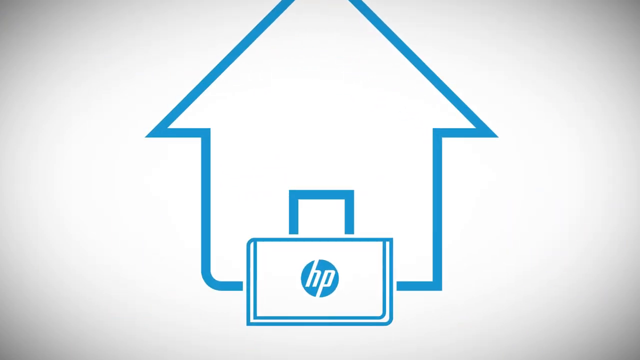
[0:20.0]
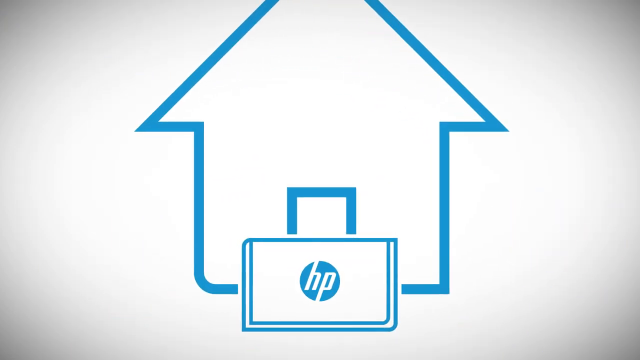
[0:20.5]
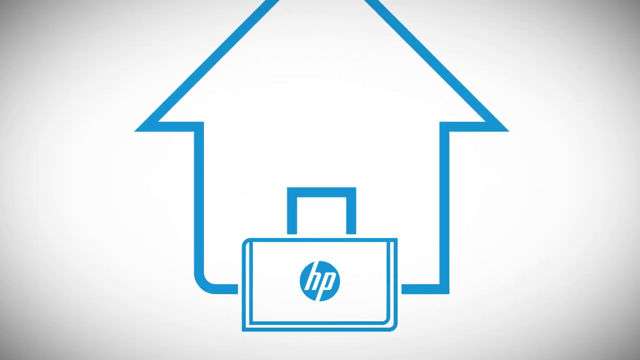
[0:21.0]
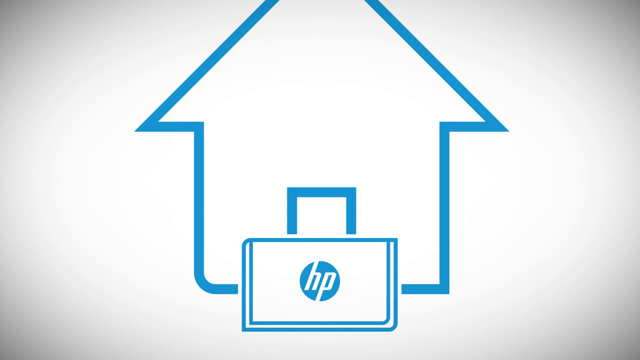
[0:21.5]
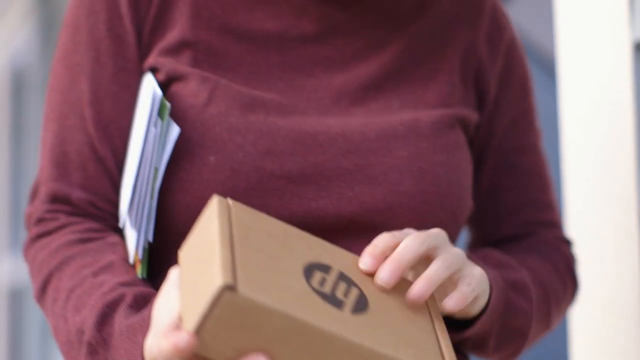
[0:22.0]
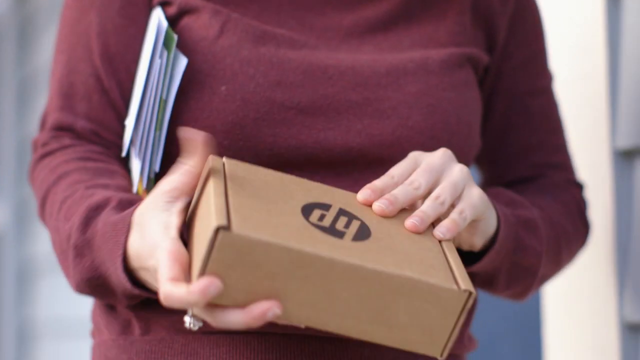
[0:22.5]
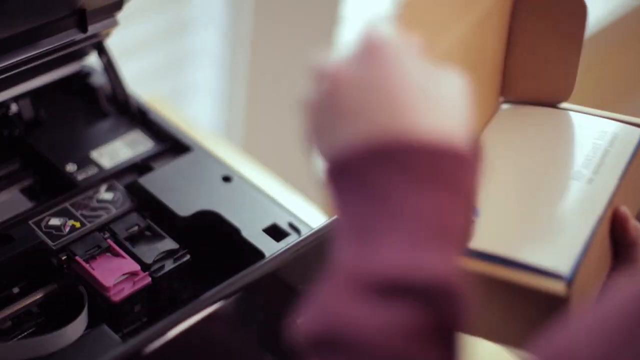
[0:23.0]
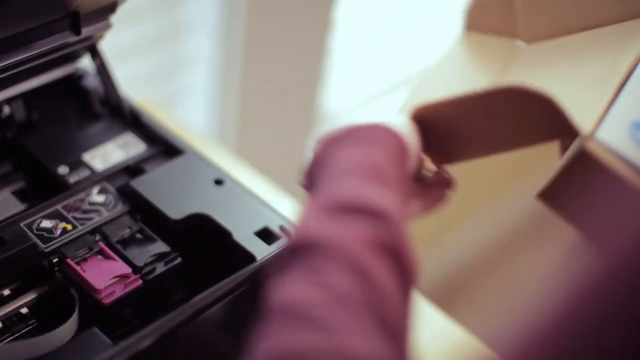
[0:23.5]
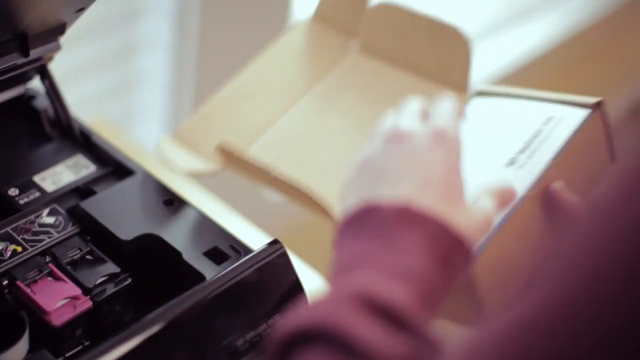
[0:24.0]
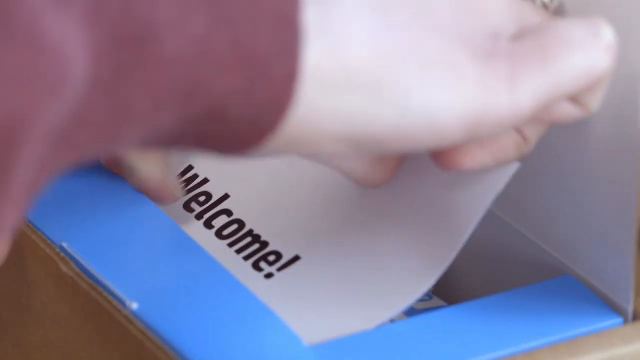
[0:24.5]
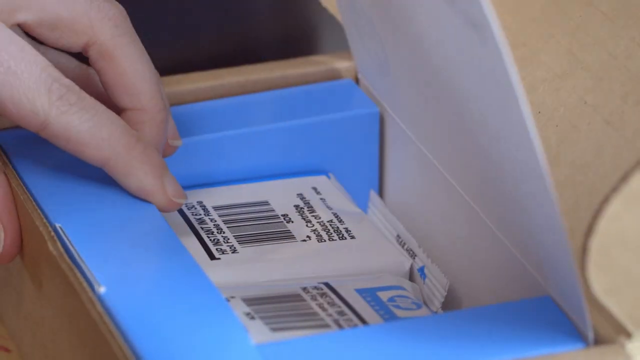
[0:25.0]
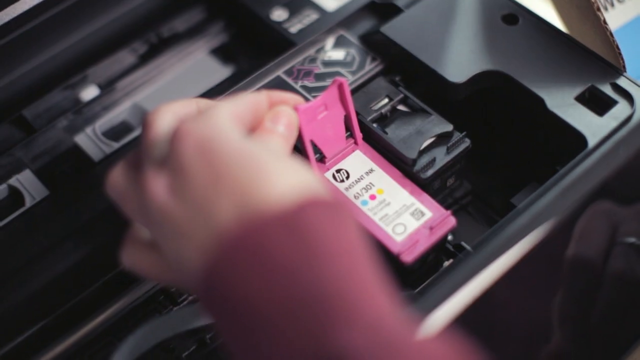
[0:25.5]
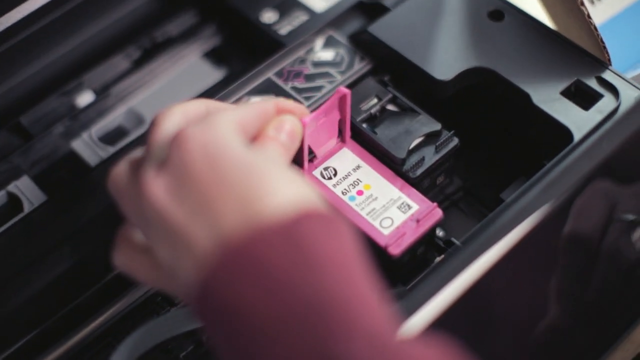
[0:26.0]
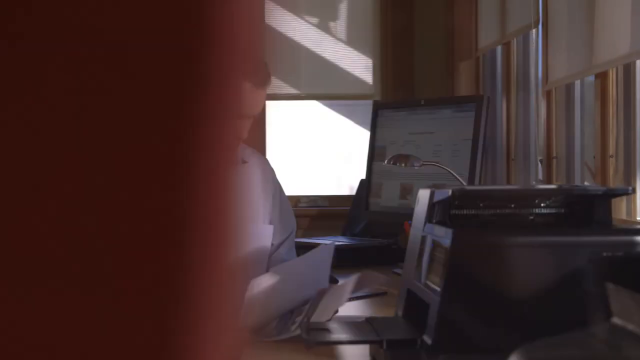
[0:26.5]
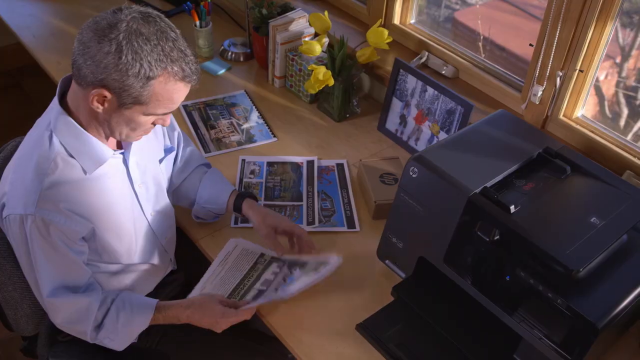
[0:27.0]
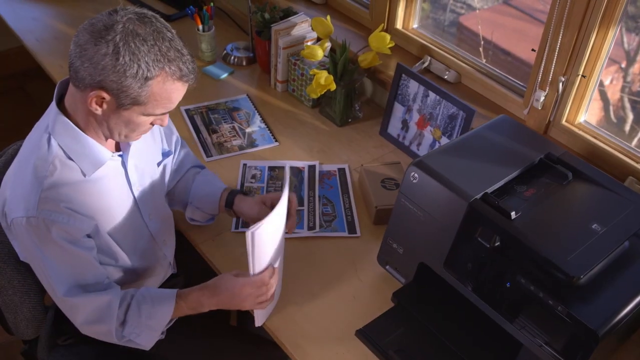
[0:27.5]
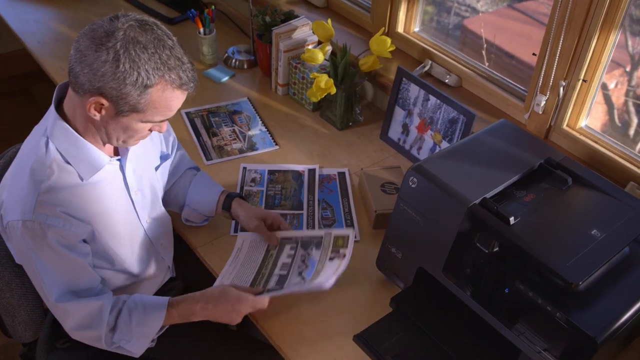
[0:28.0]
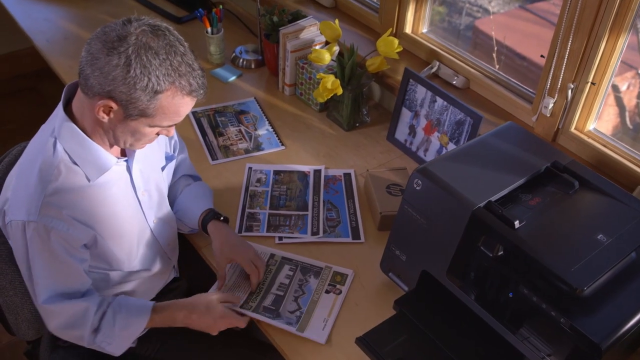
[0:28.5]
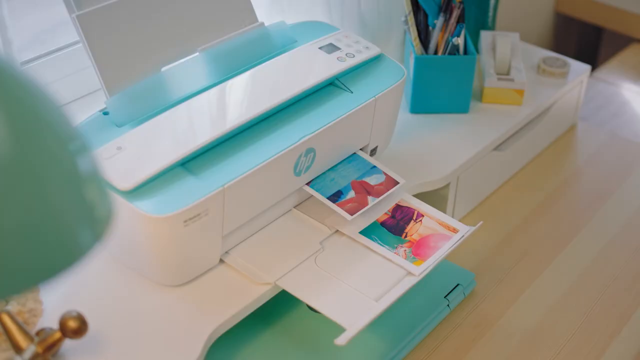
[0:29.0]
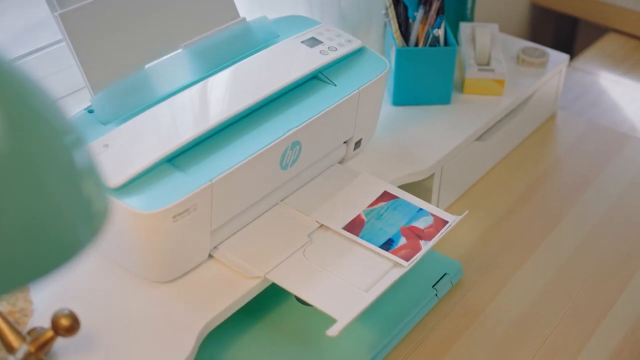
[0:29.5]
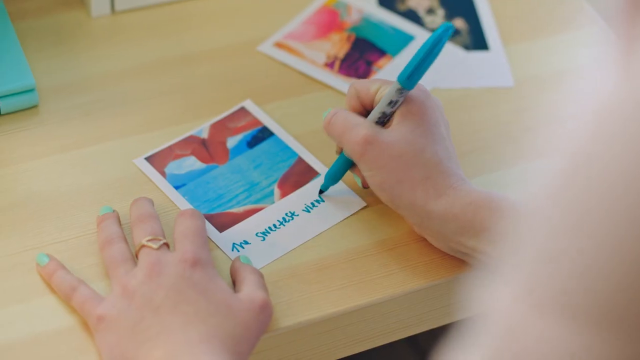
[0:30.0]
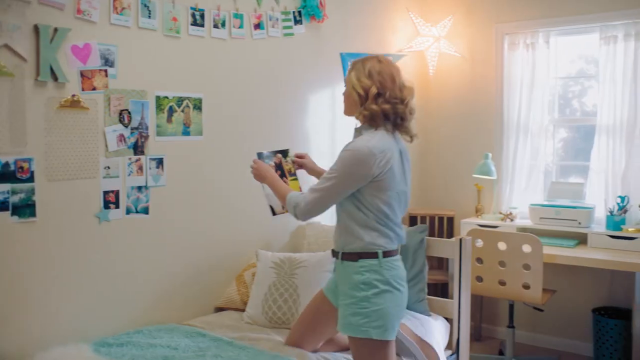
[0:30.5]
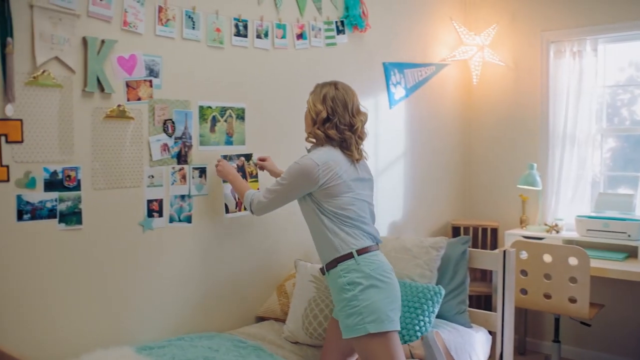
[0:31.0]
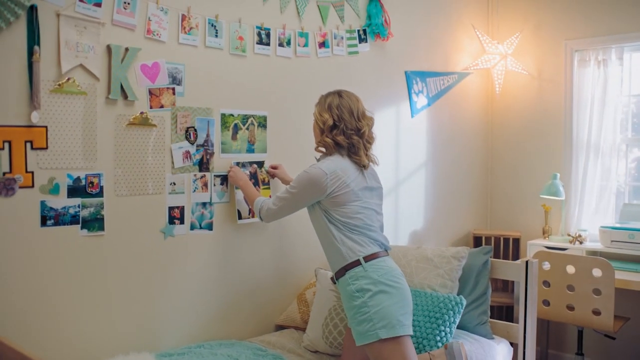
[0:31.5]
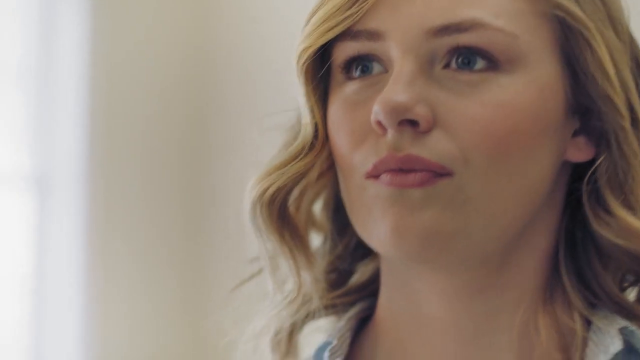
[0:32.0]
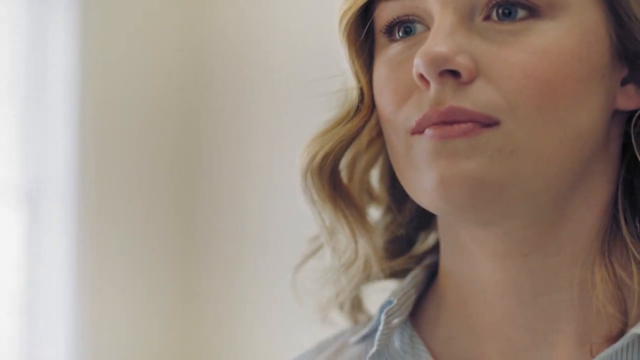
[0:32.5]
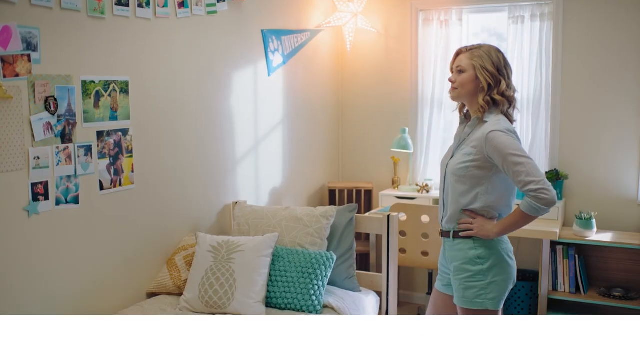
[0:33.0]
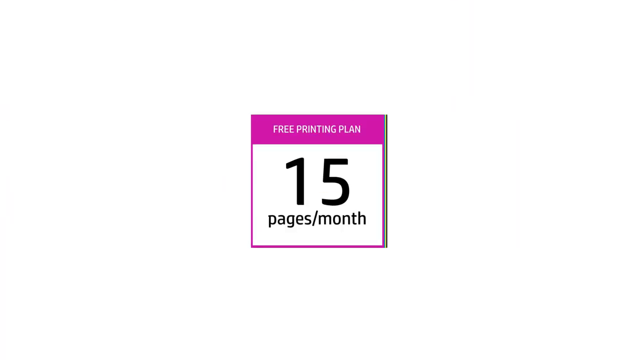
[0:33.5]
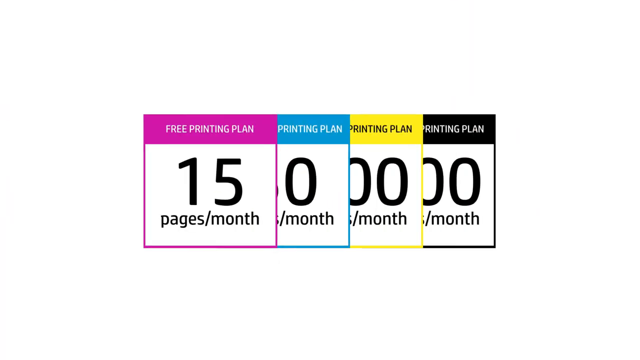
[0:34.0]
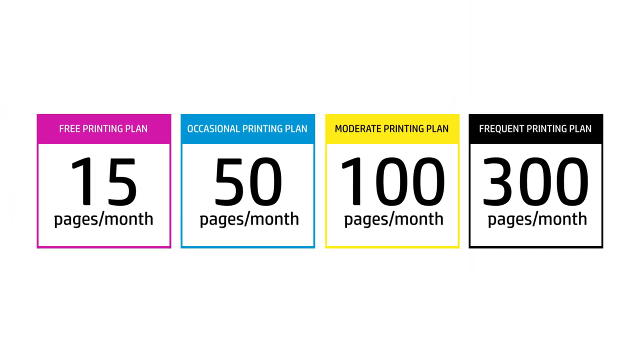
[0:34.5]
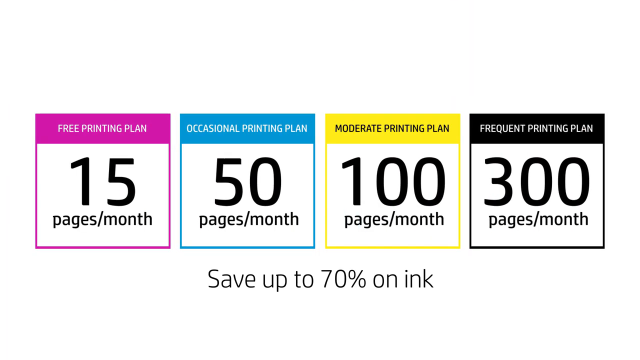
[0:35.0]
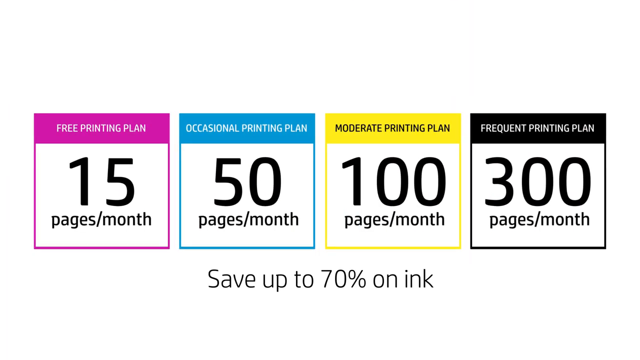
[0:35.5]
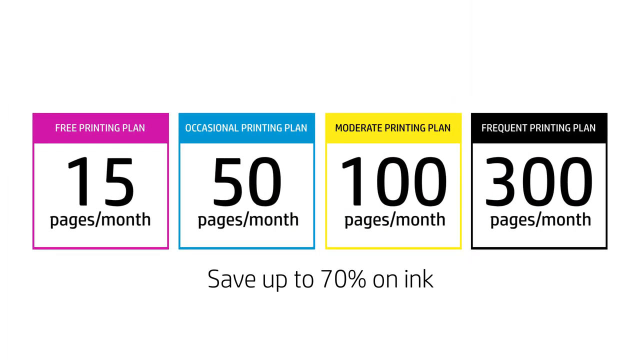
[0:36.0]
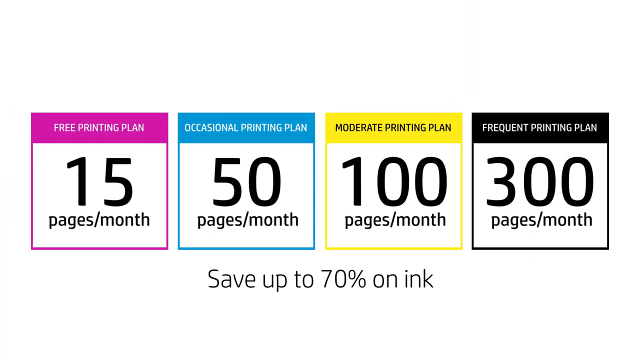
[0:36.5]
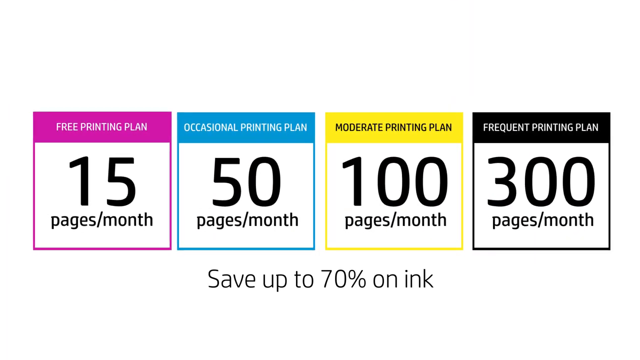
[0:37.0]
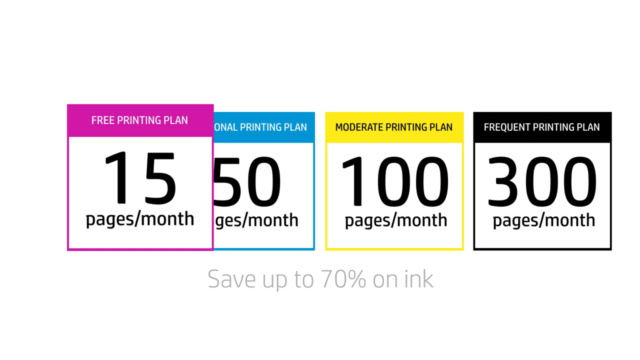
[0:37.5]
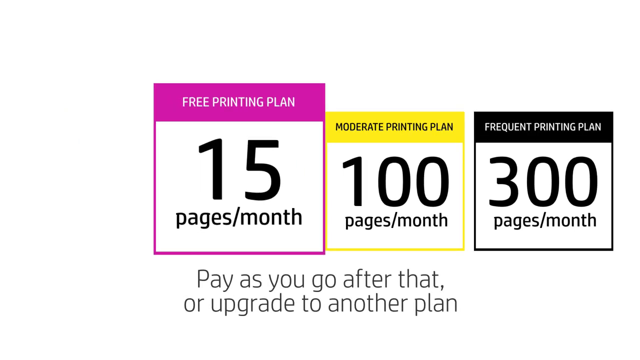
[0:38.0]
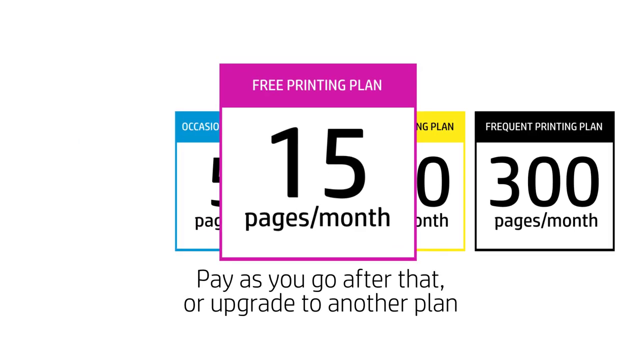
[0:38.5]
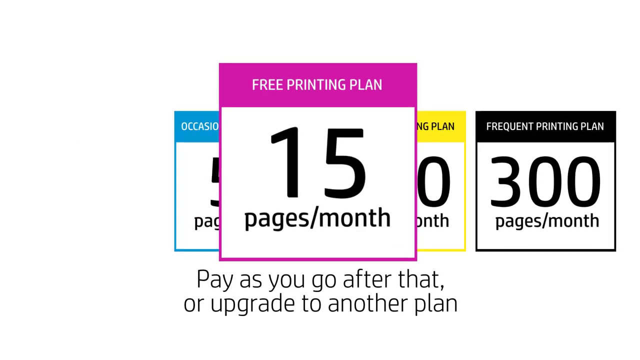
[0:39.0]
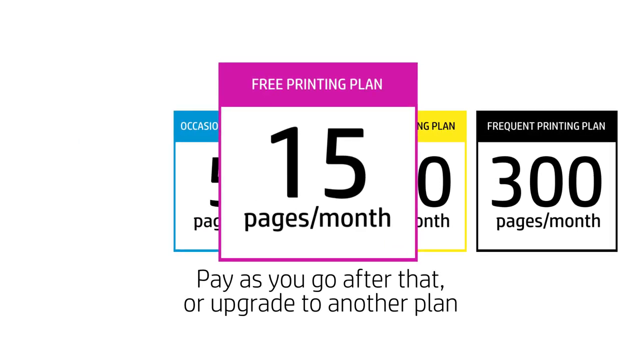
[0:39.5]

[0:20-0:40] An HP logo appears; it has a blue box on the outside and lowercase letters giving the brand name. The video then goes inside the printer to show where the cartridge is put. The cartridges inside are blue and pink, cylindrical and round. Next the video shows the printer itself, which is blue. A living room appears where a lady in a blue shirt is printing a page of paper on the printer. Four boxes then describe printing plans and ink savings: 15 pages a month, 50 pages a month, 100 pages a month and 300 pages a month.